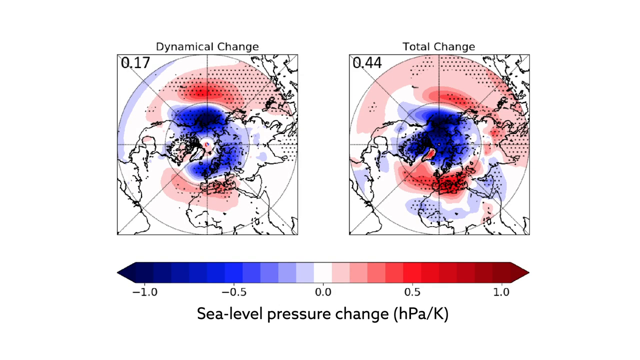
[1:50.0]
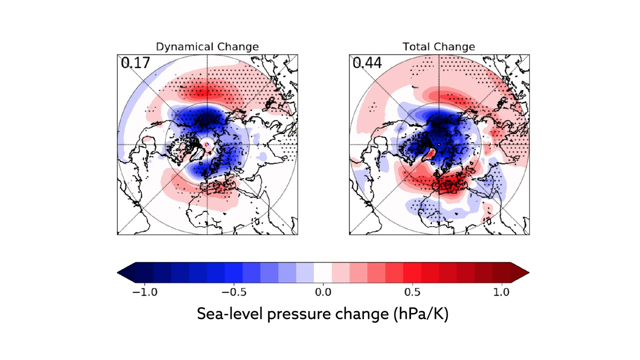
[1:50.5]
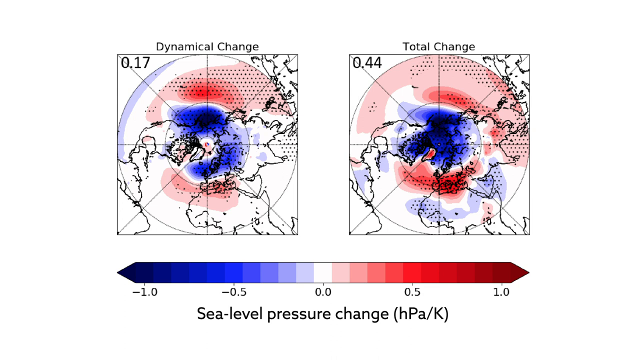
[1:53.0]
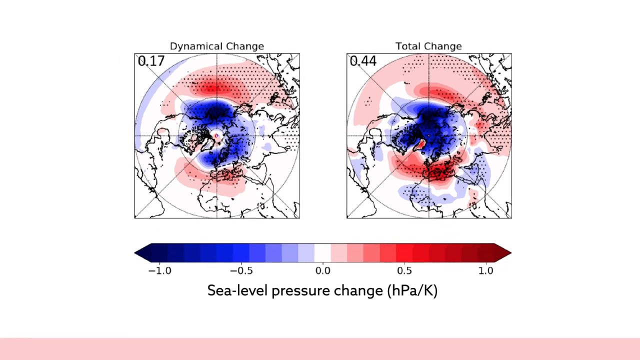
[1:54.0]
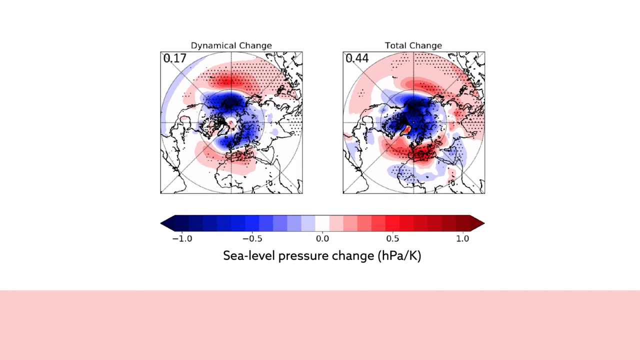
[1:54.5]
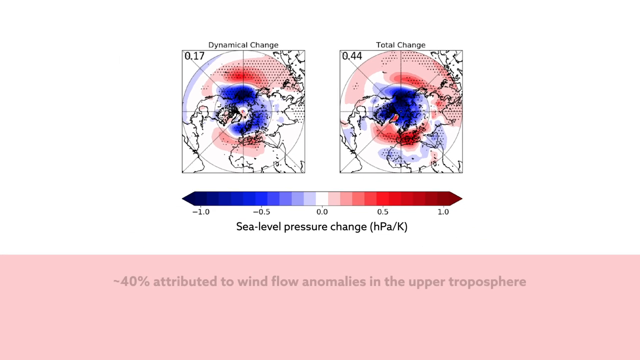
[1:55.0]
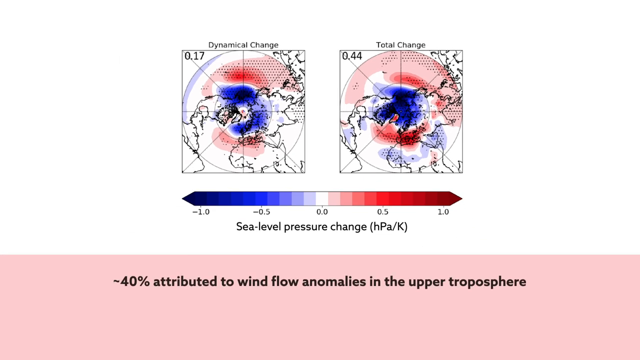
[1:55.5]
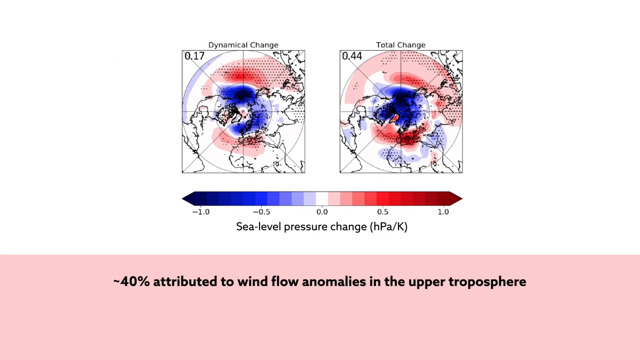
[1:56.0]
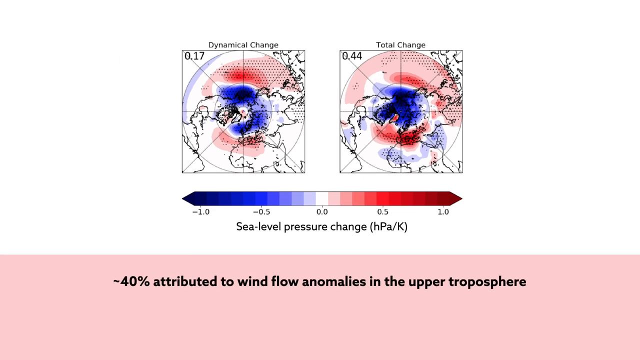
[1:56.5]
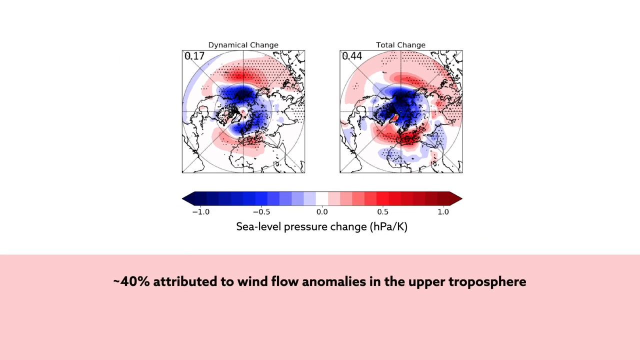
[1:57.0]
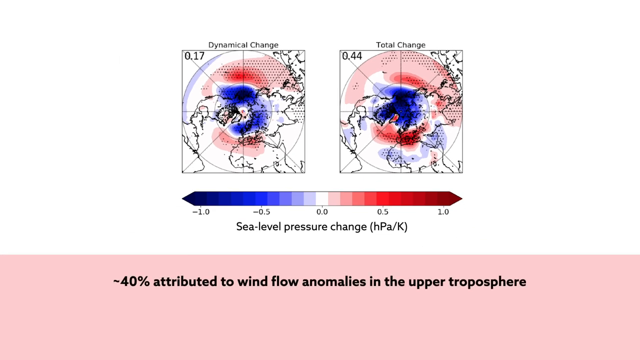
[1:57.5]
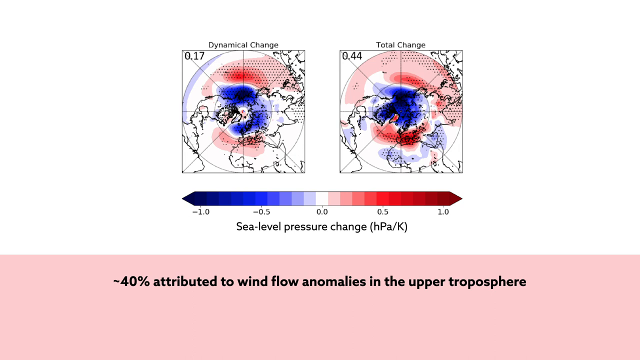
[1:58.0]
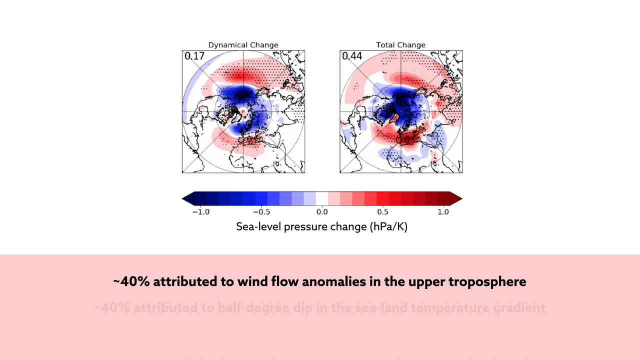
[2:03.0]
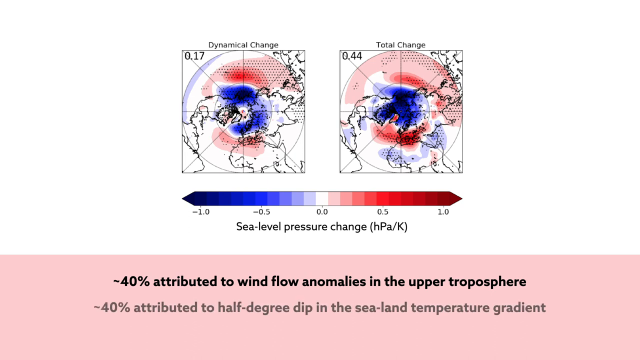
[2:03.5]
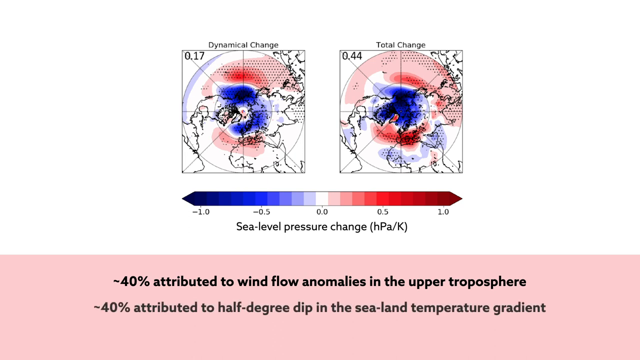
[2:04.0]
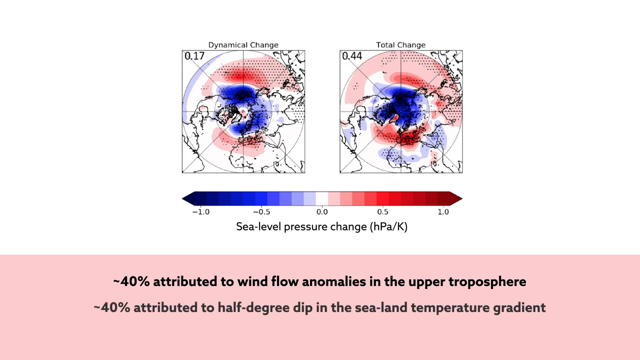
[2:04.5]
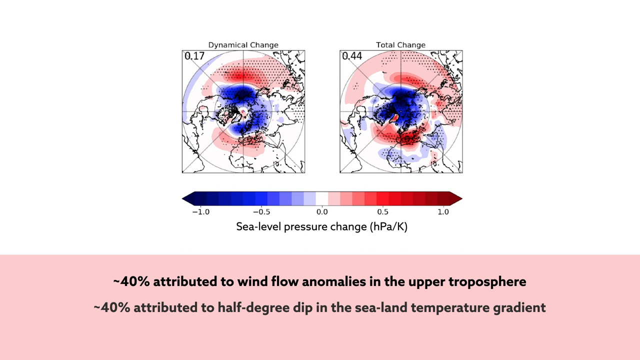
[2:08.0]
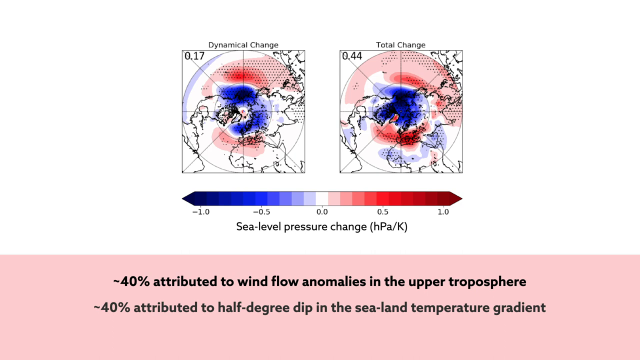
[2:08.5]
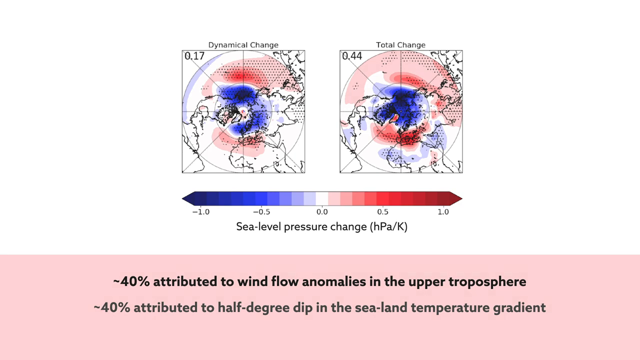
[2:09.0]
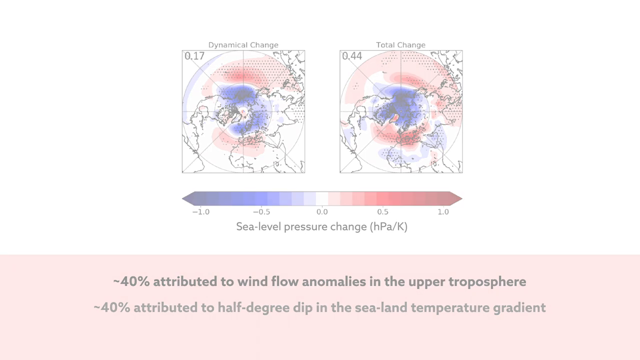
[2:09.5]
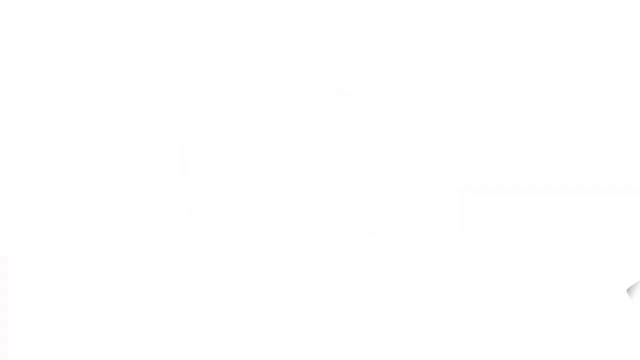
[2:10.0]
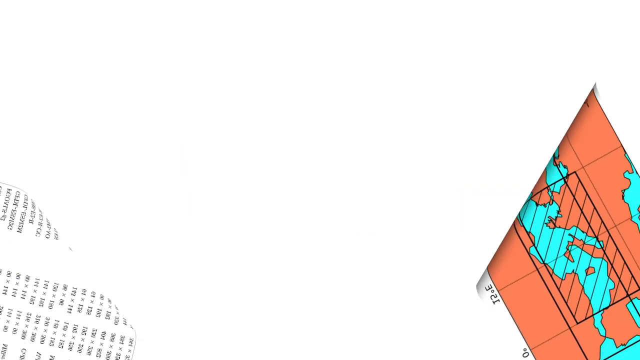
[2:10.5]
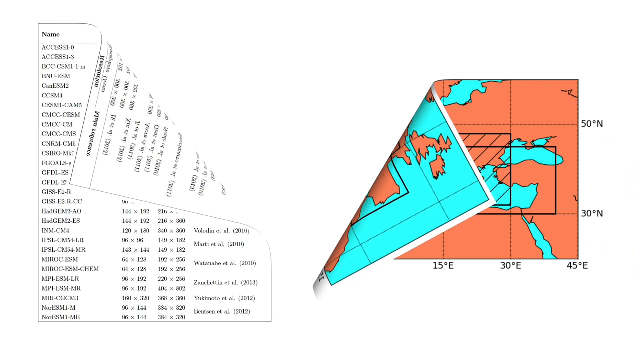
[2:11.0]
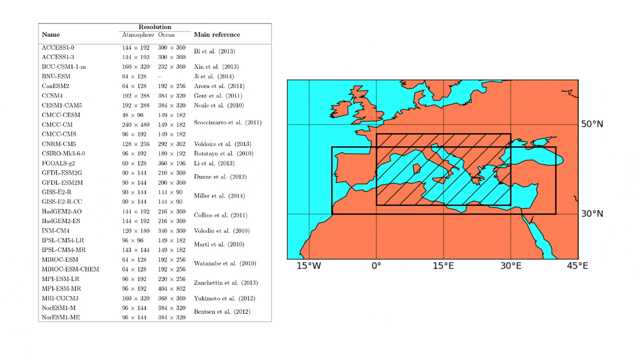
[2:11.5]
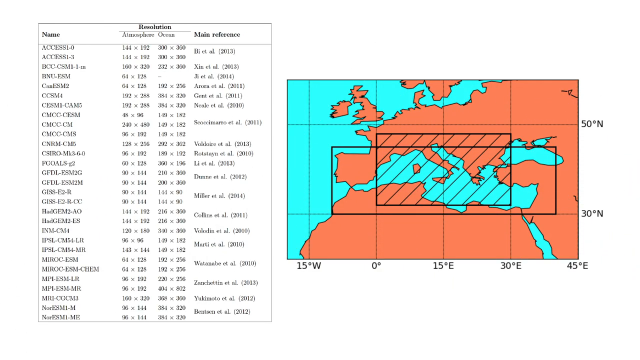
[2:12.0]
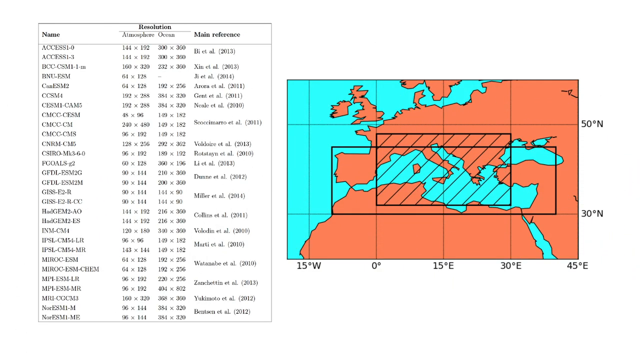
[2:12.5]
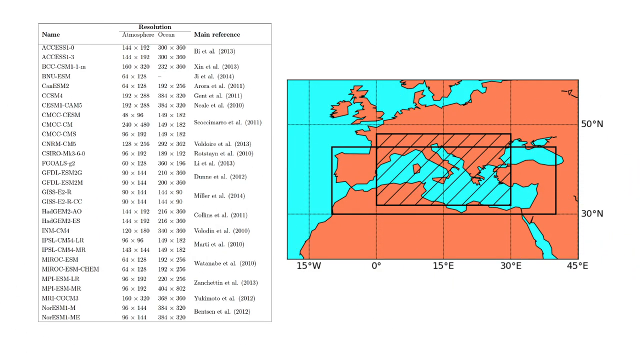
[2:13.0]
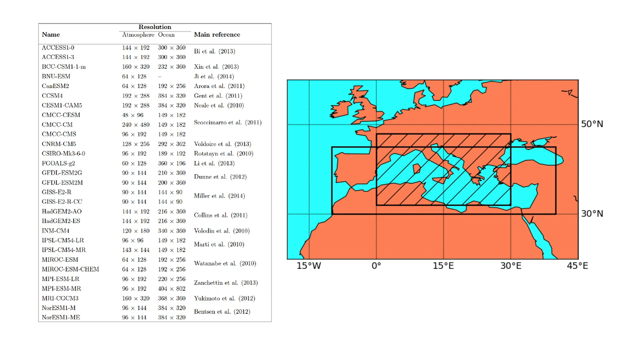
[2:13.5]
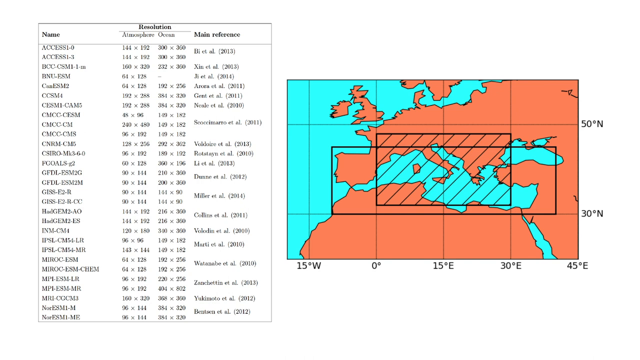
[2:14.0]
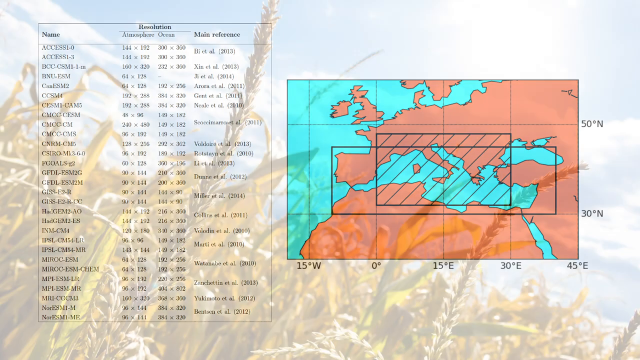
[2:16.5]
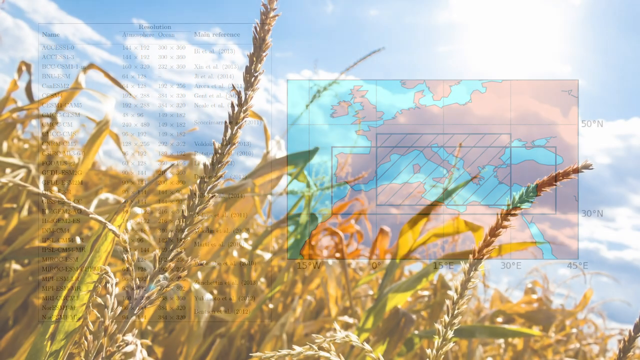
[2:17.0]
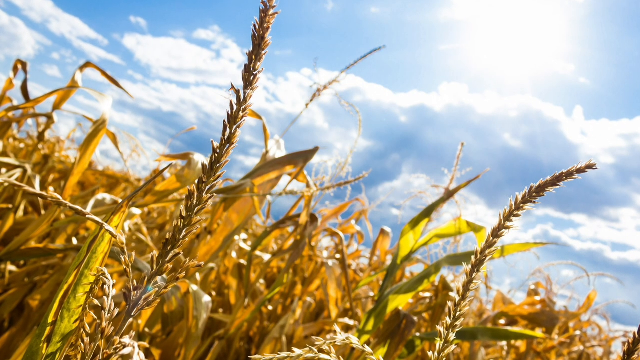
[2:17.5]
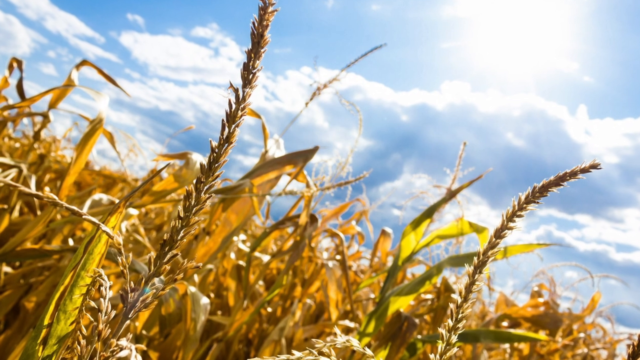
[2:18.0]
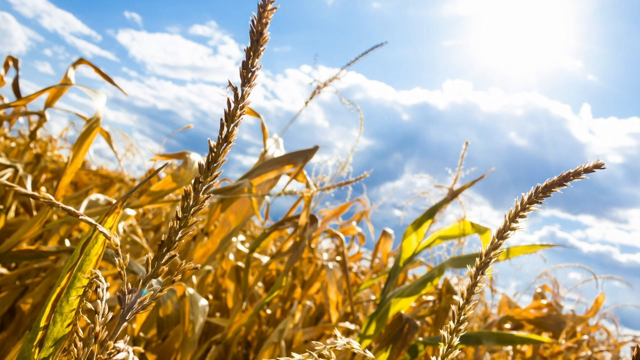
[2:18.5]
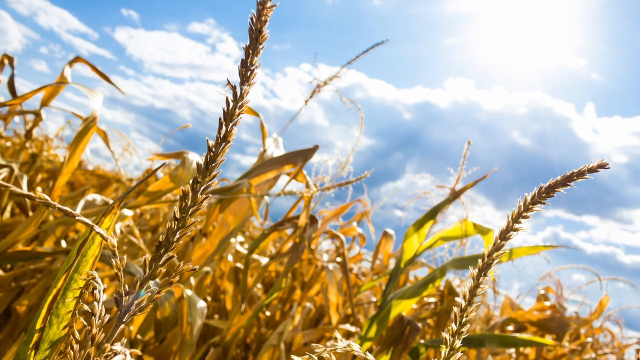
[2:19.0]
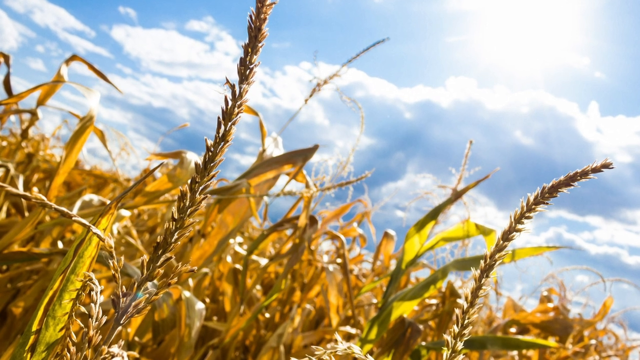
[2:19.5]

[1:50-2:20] Two maps, one on the left and one on the right, both show the North Pole. Below the maps is a color key, blue on the left with the number -1 and red on the right with +1, and underneath it the title "sea level pressure change." The middle of both maps is blue, around and inside the North Pole area, indicating a change of at least minus one. The two maps get smaller, and text appears at the bottom: "40% attributed to wind flow anomalies in the upper troposphere." More text appears below it: "40% attributed to half-degree dip in the sea-land temperature gradient." Then another map of the Mediterranean Sea area appears on the right side, and a very large chart with three columns appears on the left: the left column is "name," the middle one is for resolution, and the right one says "main reference." The scene then changes to some very tall grains and leaves.